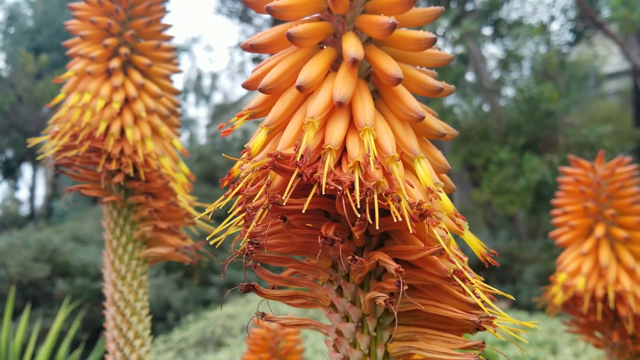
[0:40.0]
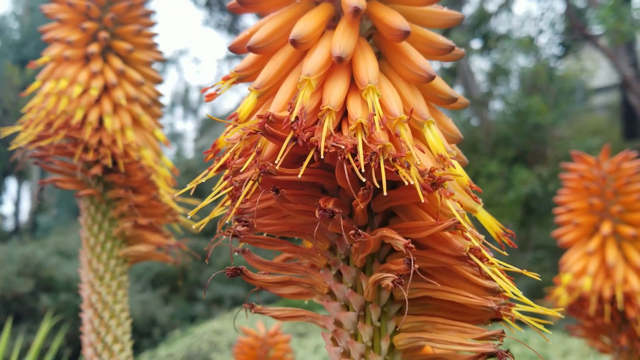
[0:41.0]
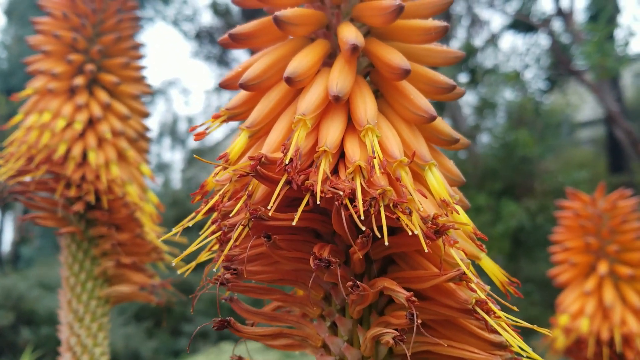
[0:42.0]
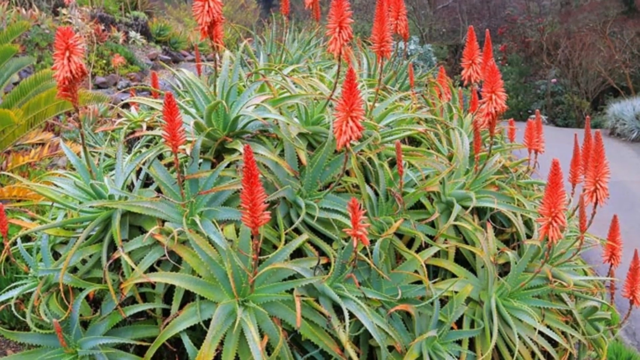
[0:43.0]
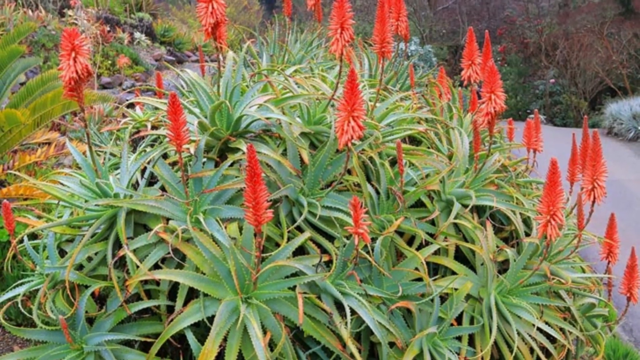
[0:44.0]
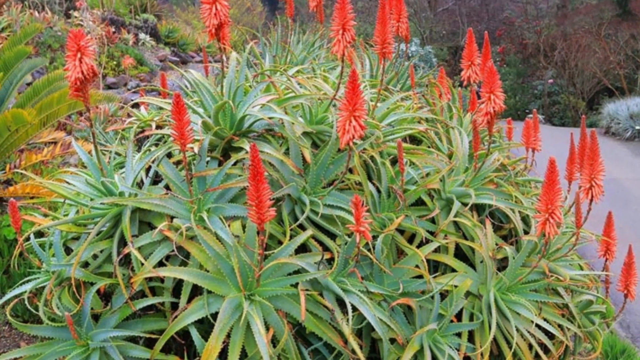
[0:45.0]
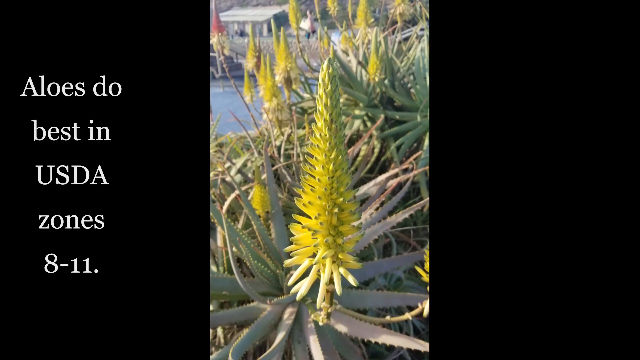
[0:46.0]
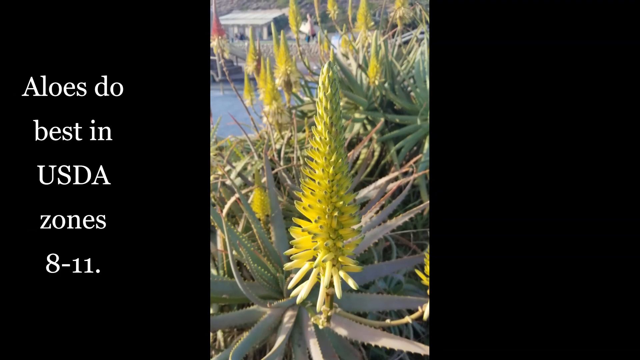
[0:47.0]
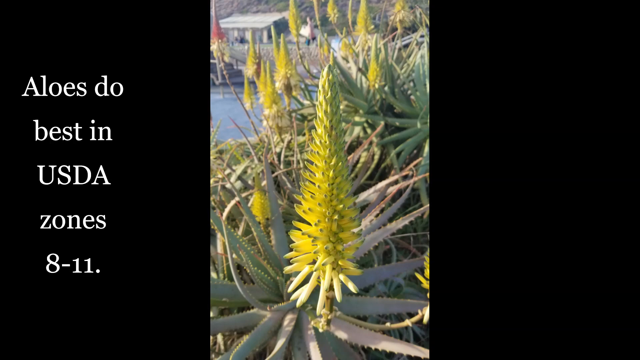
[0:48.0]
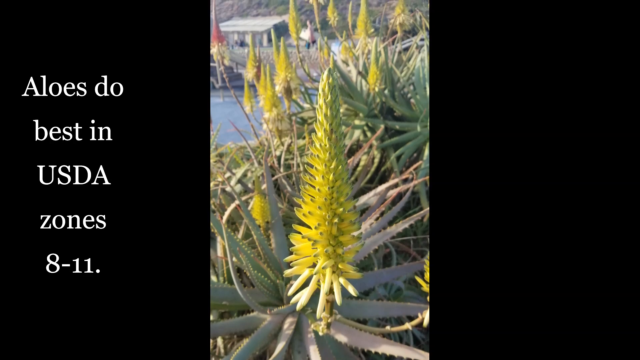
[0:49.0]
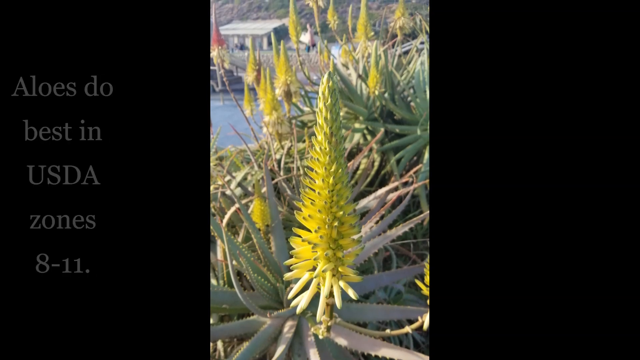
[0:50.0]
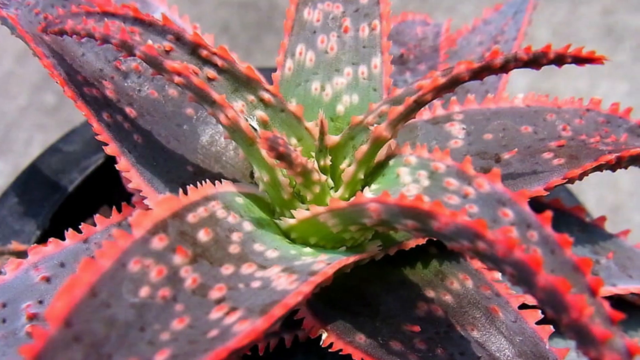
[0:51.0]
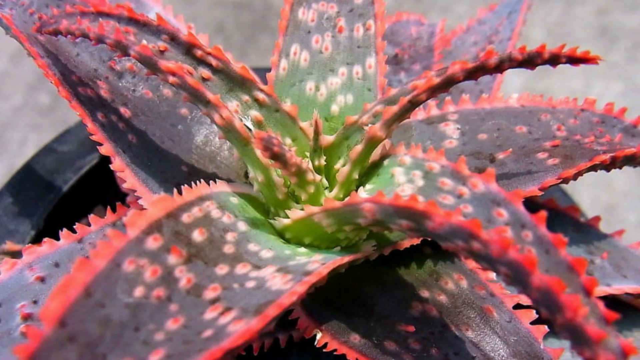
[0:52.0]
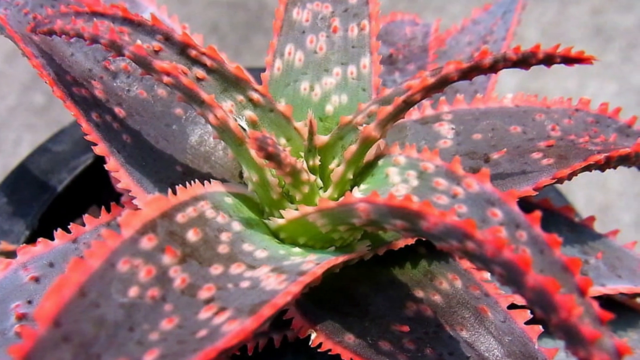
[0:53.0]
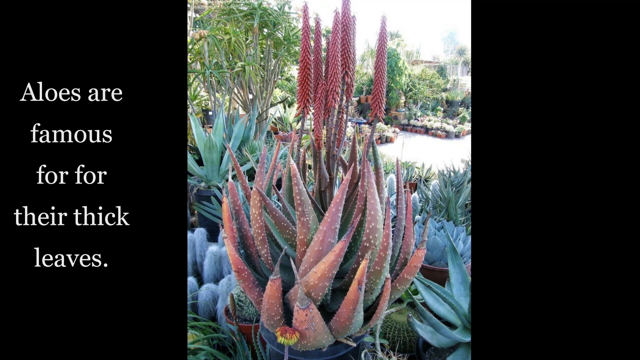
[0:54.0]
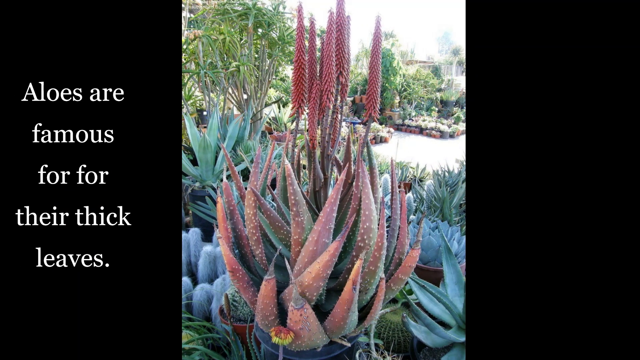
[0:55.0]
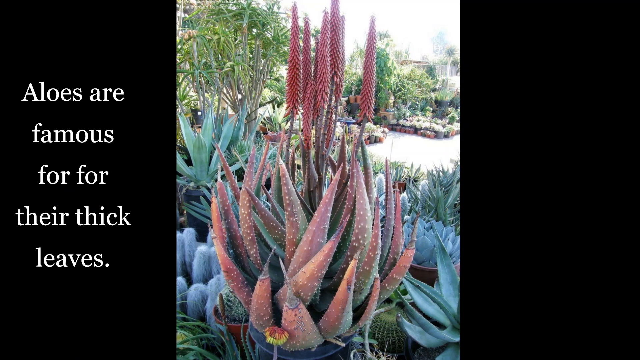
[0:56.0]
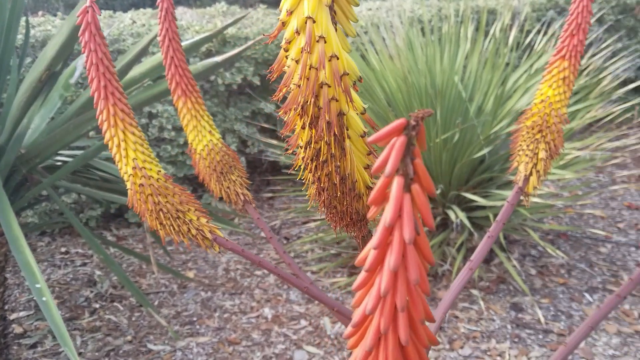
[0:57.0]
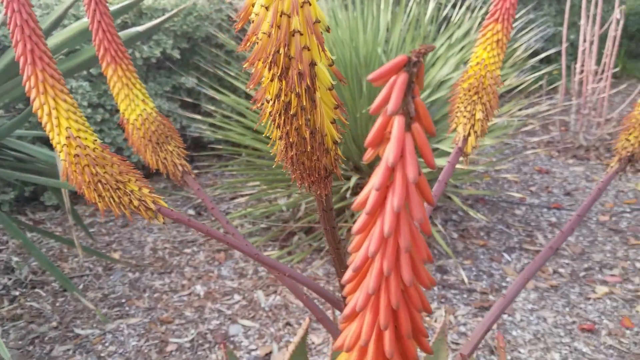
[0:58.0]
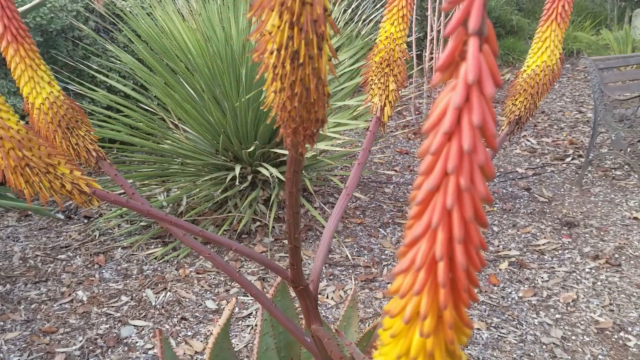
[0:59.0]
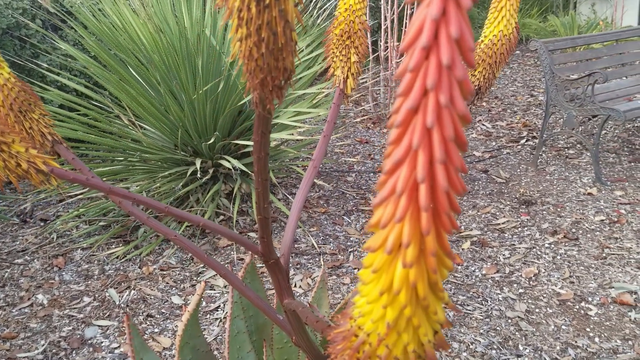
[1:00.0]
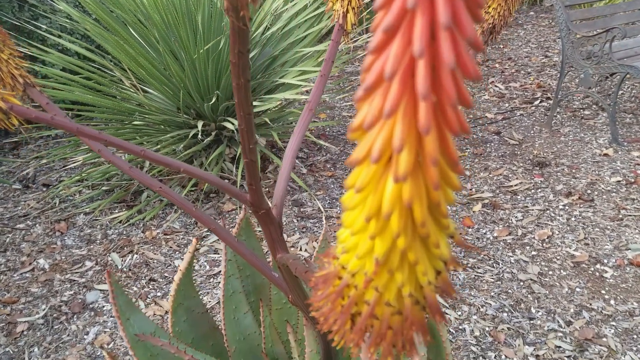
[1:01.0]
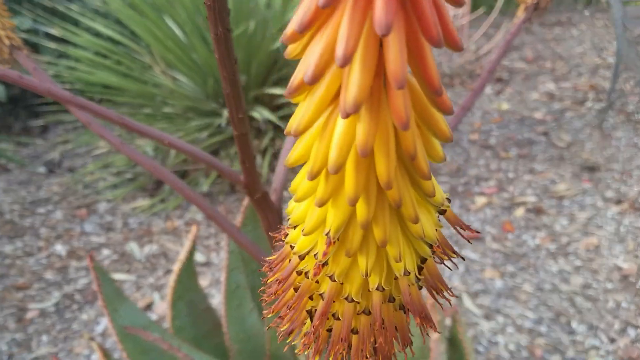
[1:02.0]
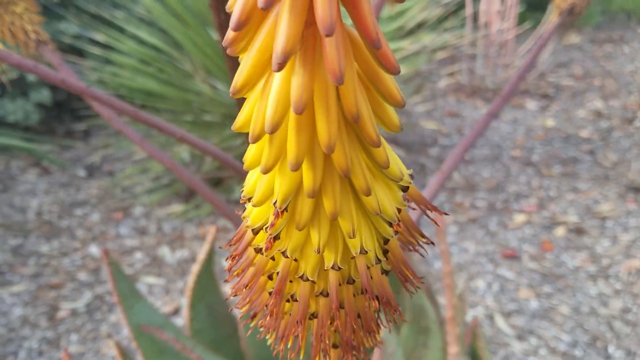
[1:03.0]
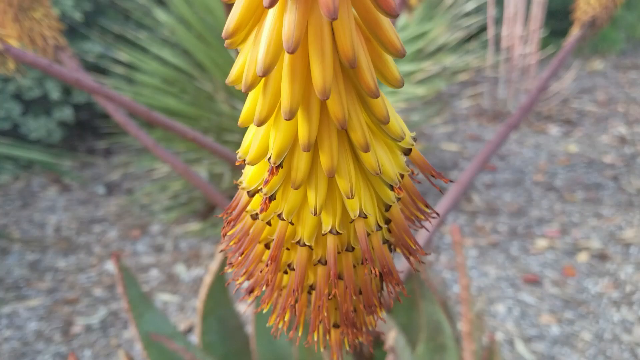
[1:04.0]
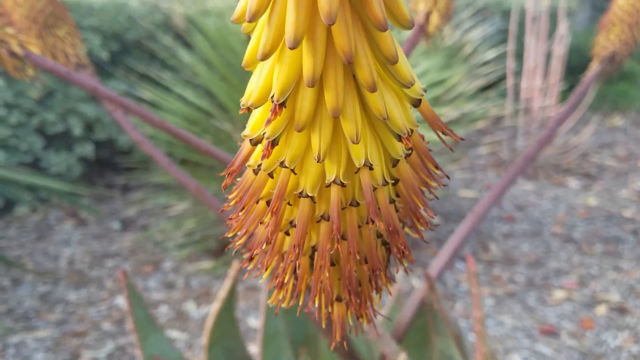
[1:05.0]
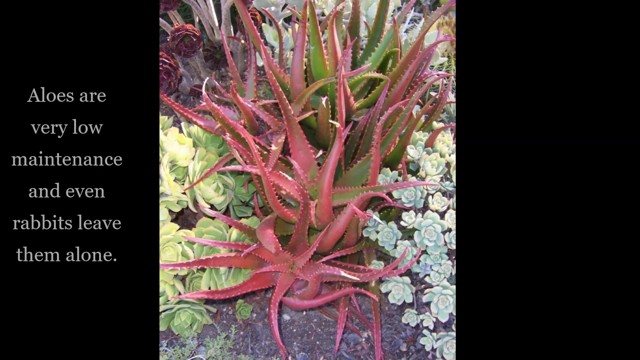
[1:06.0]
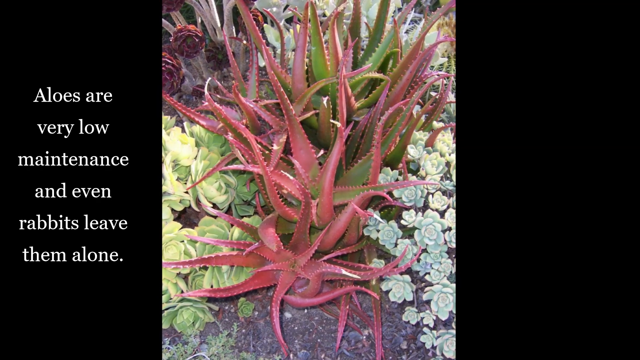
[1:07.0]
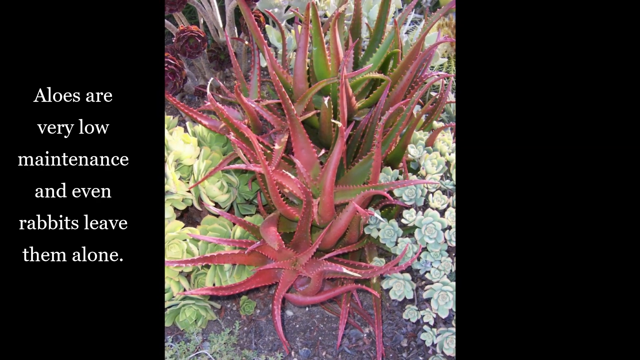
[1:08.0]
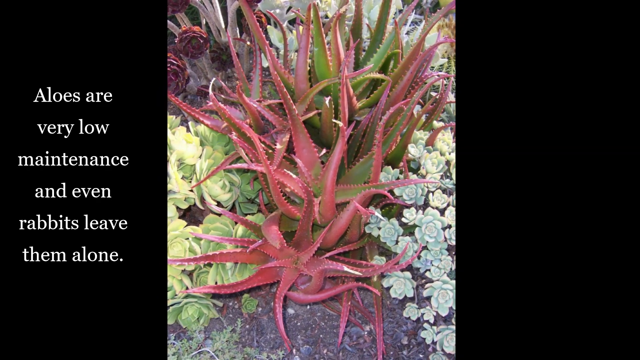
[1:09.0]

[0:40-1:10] A close-up shows a bunch of very bright orange flower buds on top of a plant, probably an aloe. The buds are long and oval, almost like little bananas. The camera moves a little, then the video cuts to a farther view of some aloe with more red-looking buds. Next comes a narrow vertical still image, not video, with black bars on each side, showing aloe with green buds; white text on a black background on the left reads "aloes do best in USDA zones, eight through 11". The image moves slightly, then the video cuts to aloe leaves with more text. The cuts are very quick, with much focus on the top bud parts of the aloes. At the end, aloe leaves appear with the text "aloes are very low maintenance and even rabbits leave them alone".